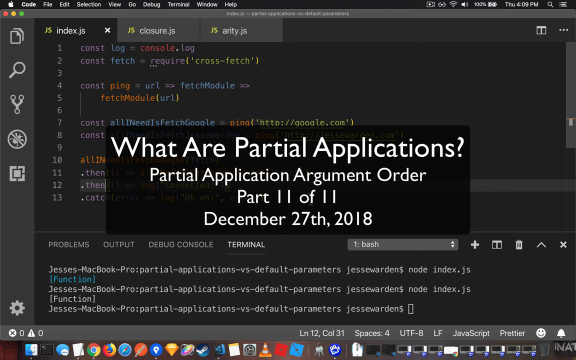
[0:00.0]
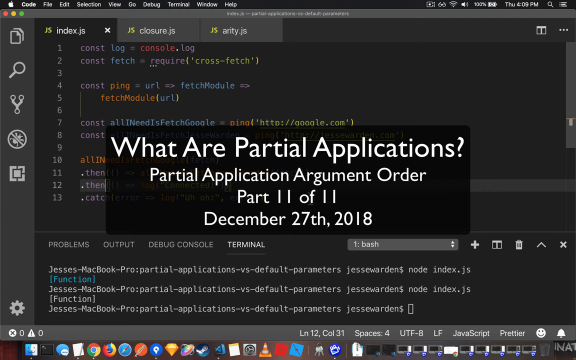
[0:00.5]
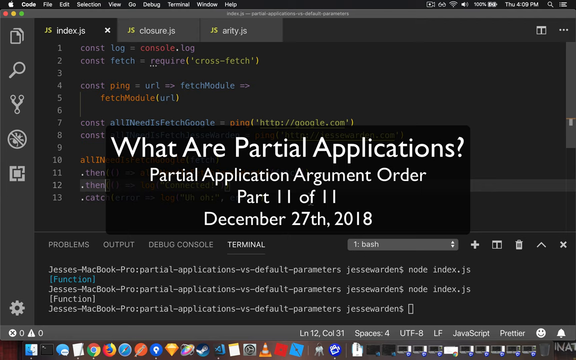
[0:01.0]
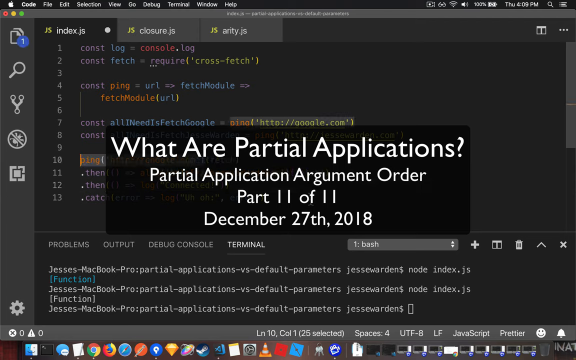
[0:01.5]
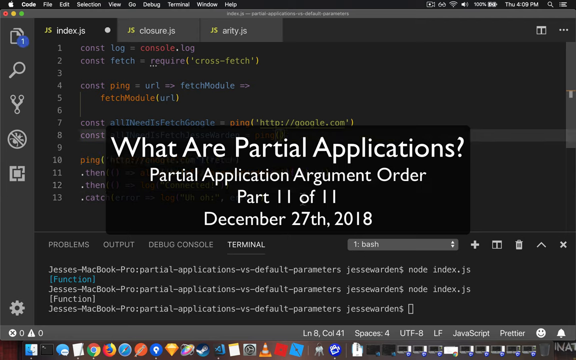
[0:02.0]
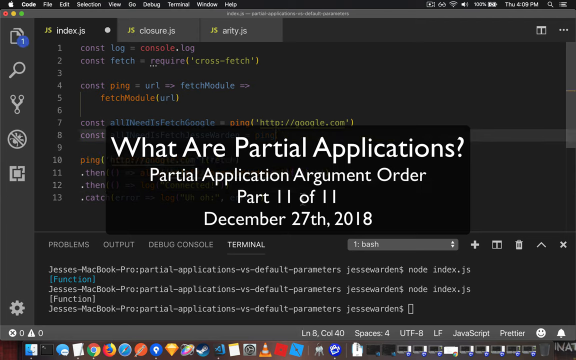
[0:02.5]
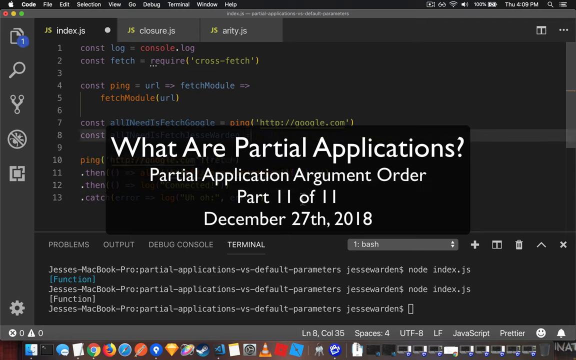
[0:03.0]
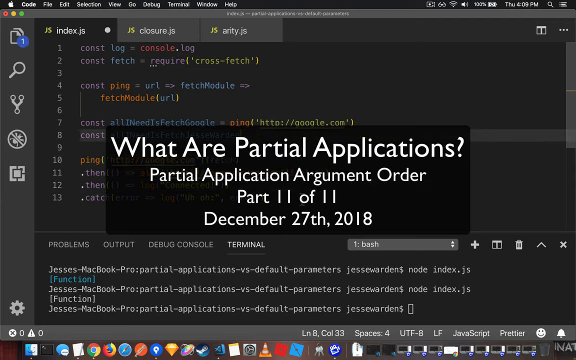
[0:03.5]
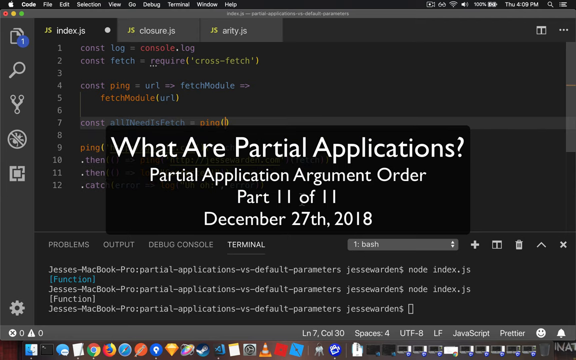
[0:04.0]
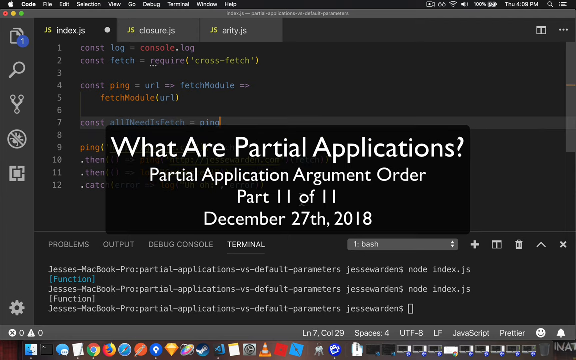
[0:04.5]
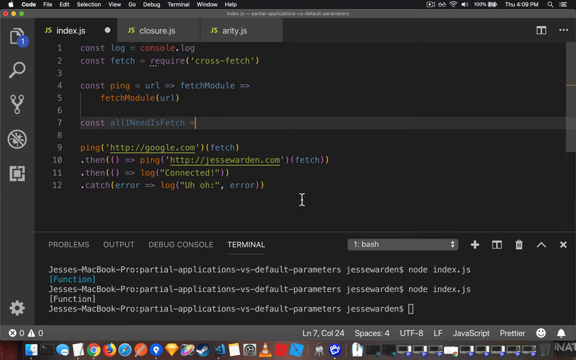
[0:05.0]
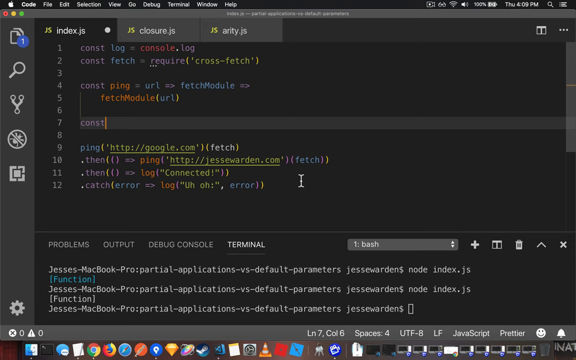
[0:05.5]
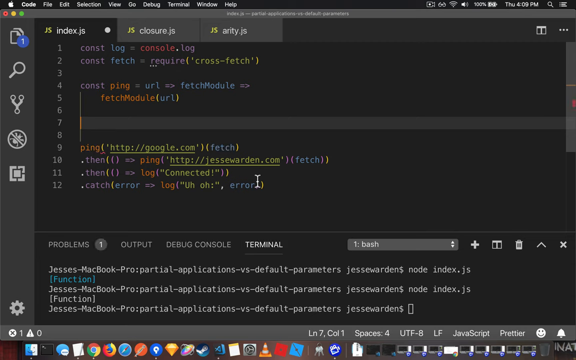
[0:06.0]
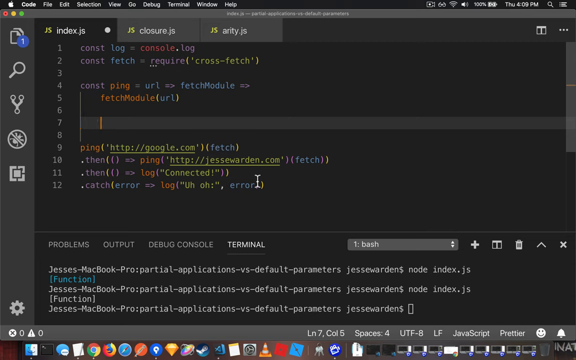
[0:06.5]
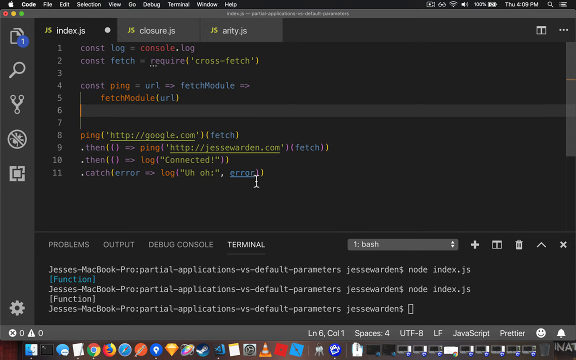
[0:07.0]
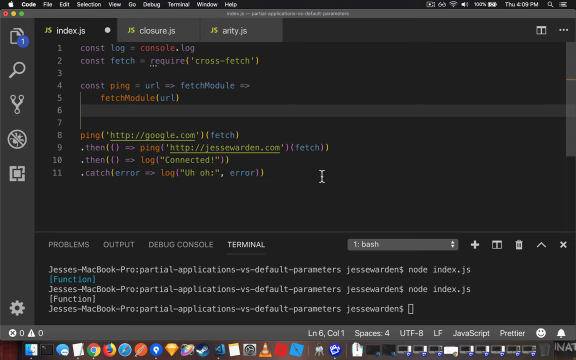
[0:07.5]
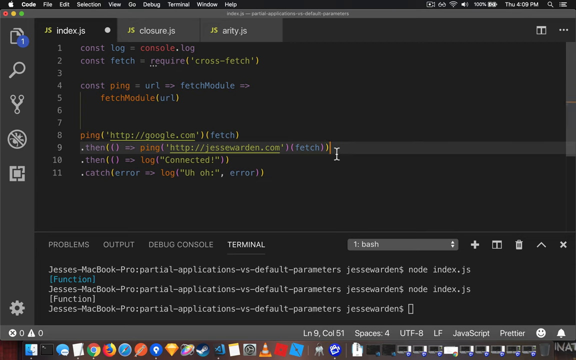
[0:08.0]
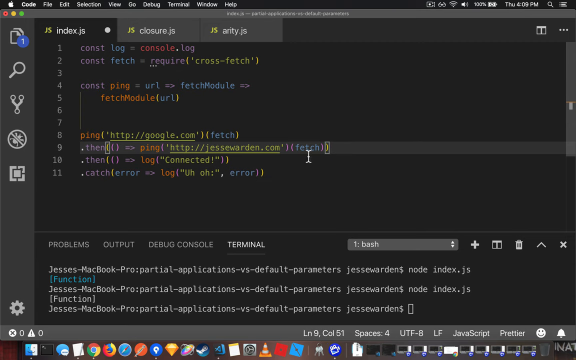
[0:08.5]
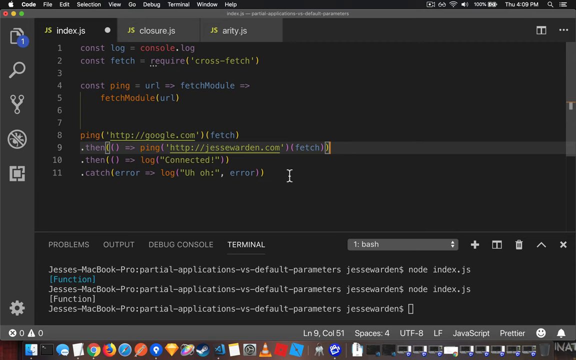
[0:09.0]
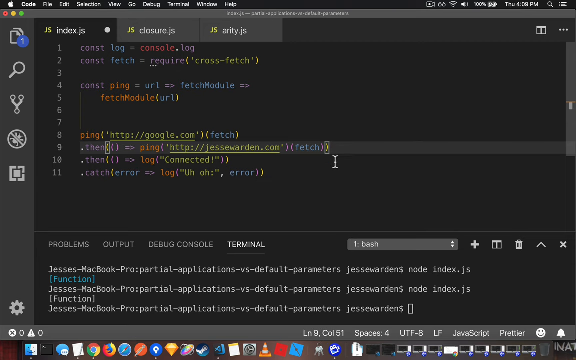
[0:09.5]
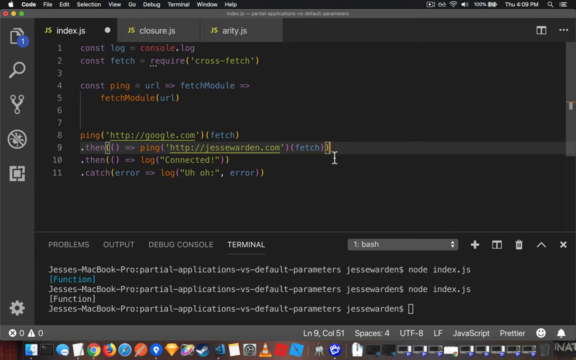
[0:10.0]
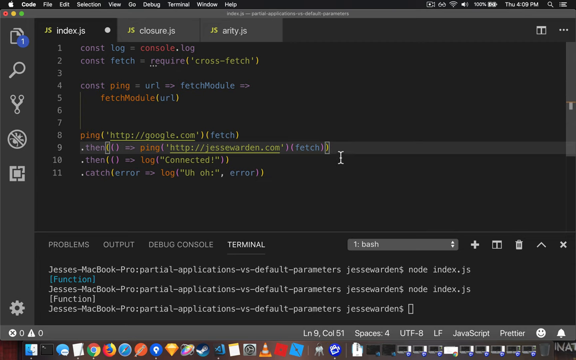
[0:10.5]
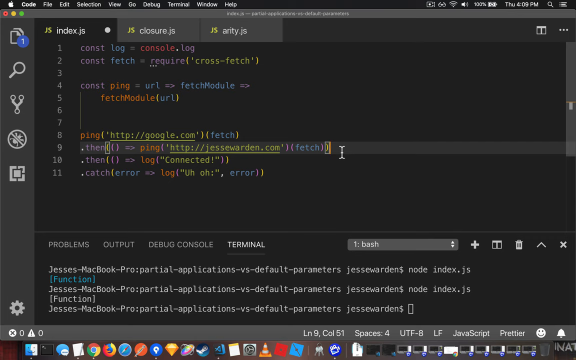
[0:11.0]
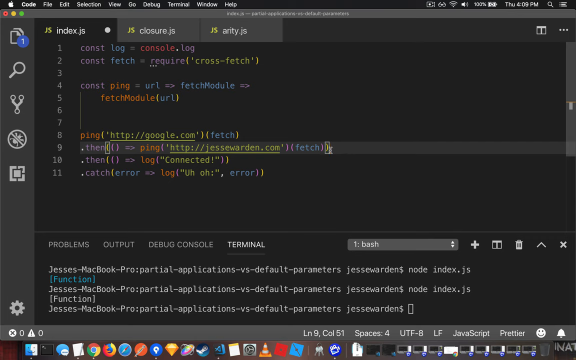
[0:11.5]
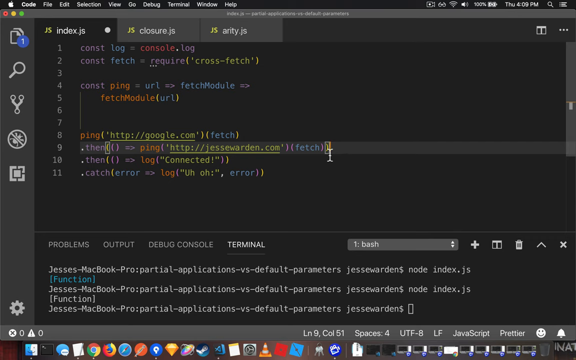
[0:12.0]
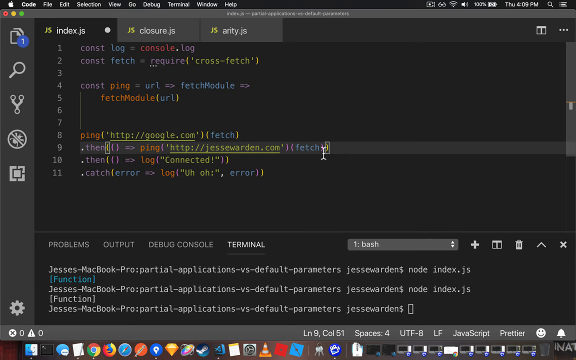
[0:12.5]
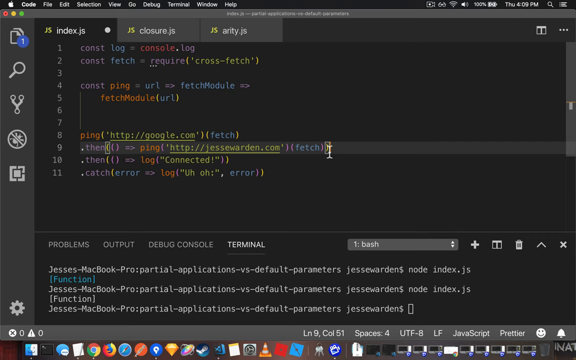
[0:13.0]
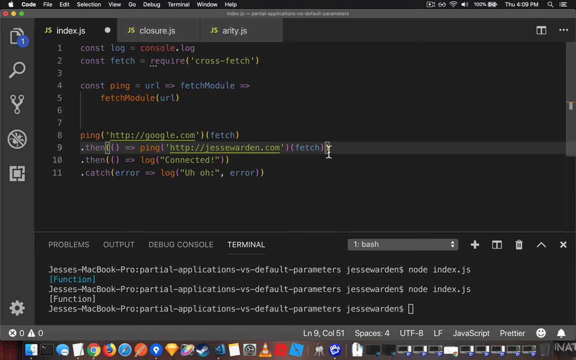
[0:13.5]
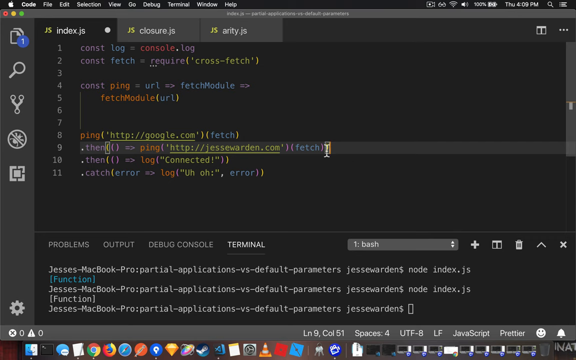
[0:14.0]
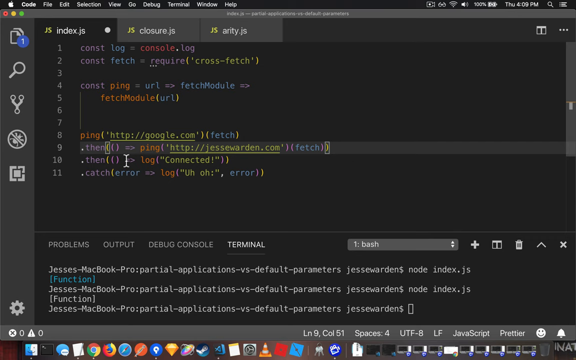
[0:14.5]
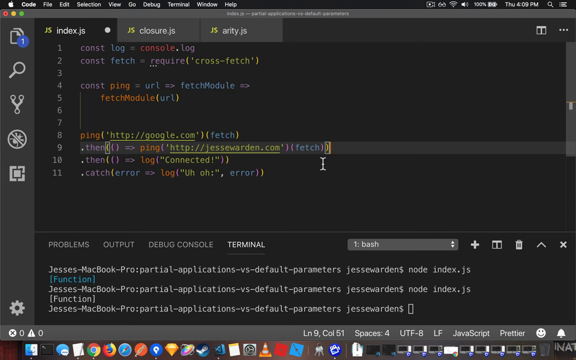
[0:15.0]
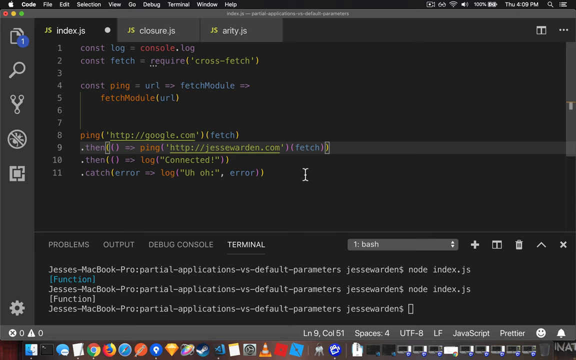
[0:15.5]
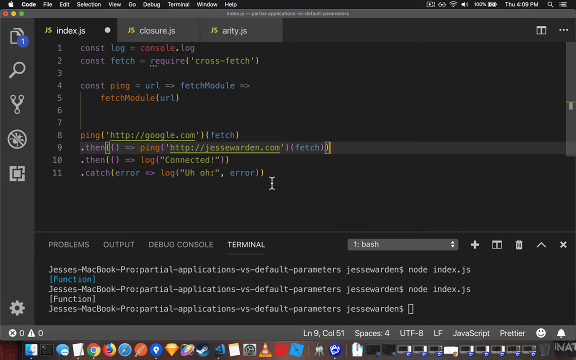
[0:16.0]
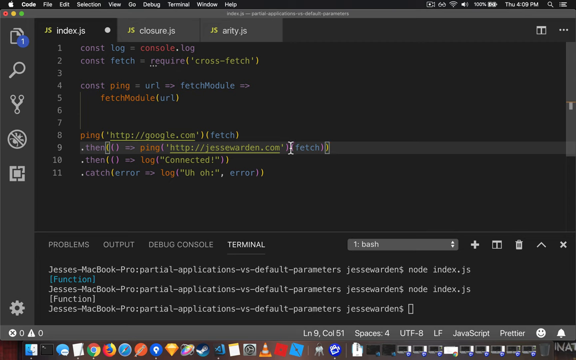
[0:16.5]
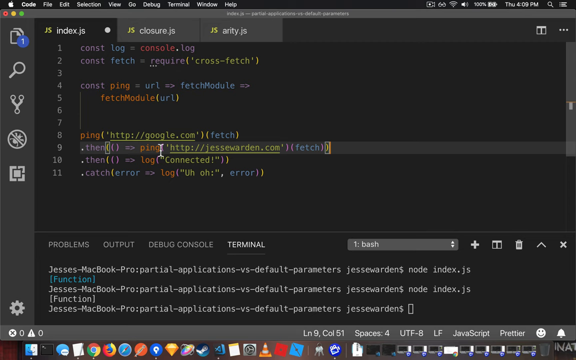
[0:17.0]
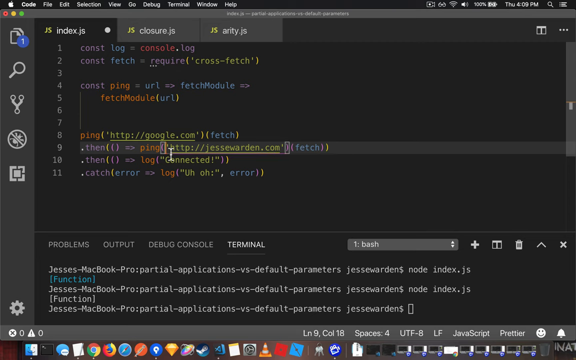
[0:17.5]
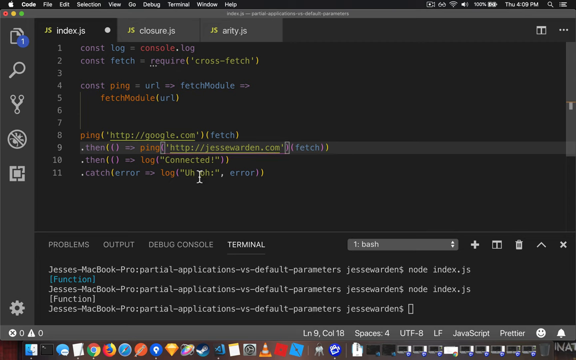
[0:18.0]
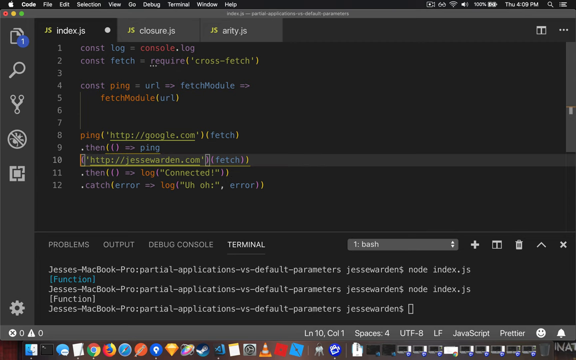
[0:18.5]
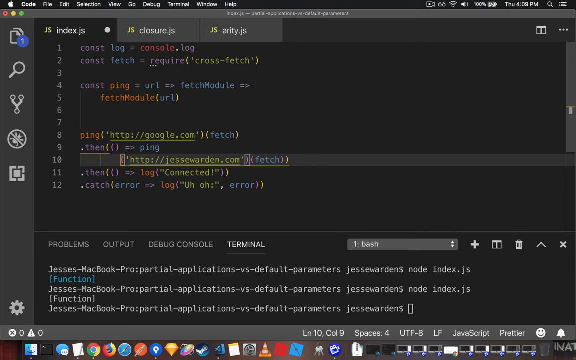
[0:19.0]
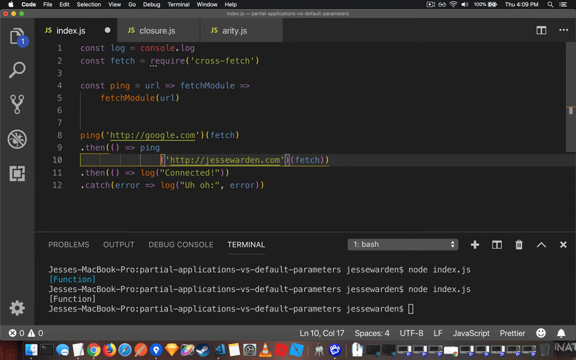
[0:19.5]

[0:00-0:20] A lot of code, apparently JavaScript or something similar, appears on a gray background. At the beginning, a transparent black rectangle in the middle holds white text reading "what are partial applications? Partial application argument order, part one of one, December 27th, 2018." Behind it, a lot of the code seems to be deleted or erased in the middle. The code has the numbers 1 through 11 on the left side and reads "const log equals console.log, const fetch equals require crossfetch, const ping equals URL equals fetch module, fetch module URL," then, indented by two spaces, "ping HTTP google.com fetch, then ping HTTP jessewarden.com fetch, then log connected, catch error log, uh-oh, error." A white mouse cursor moves around and goes over the "then ping HTTP jessewarden.com fetch" line on line nine. The cursor makes counterclockwise circles and highlights different parts of the code. It then clicks in front of the parentheses containing HTTP jessewarden.com, presses enter to create a new line, and presses tab a few times to bring the text over to the middle.